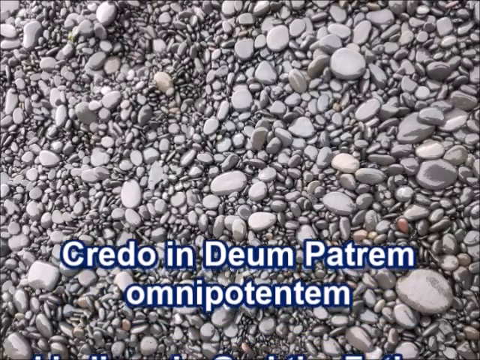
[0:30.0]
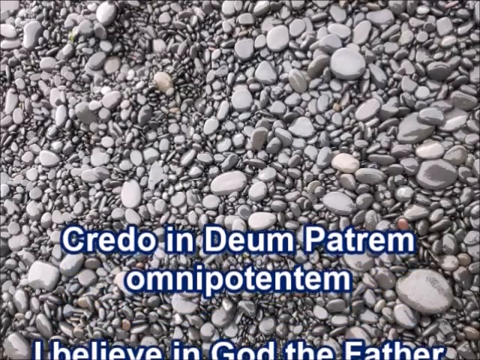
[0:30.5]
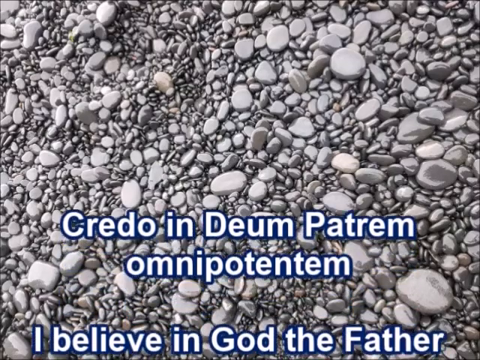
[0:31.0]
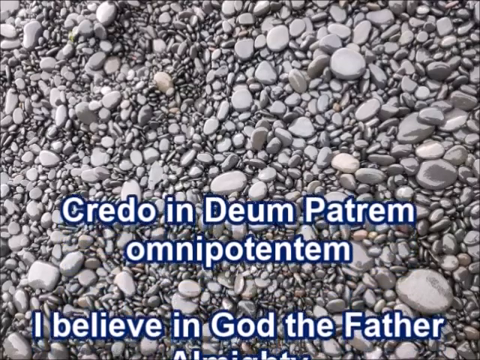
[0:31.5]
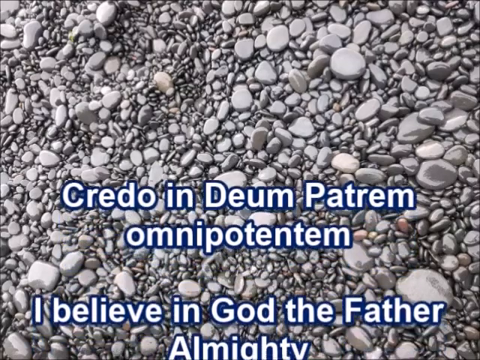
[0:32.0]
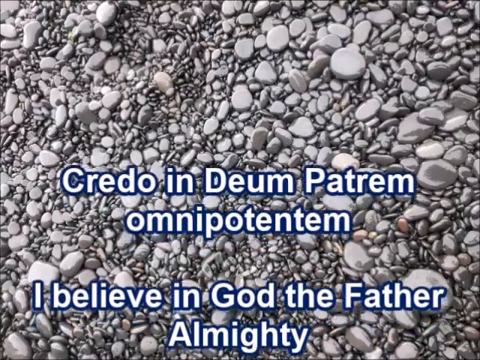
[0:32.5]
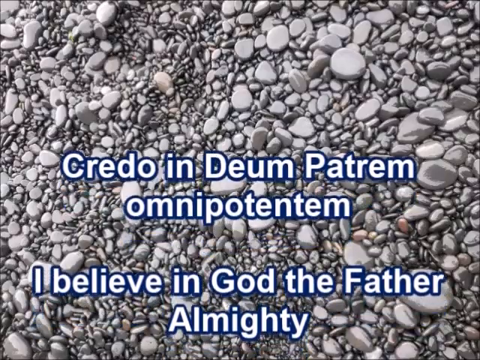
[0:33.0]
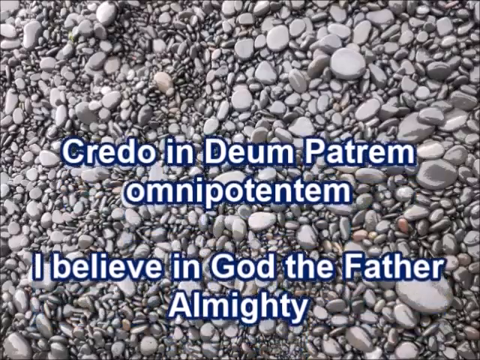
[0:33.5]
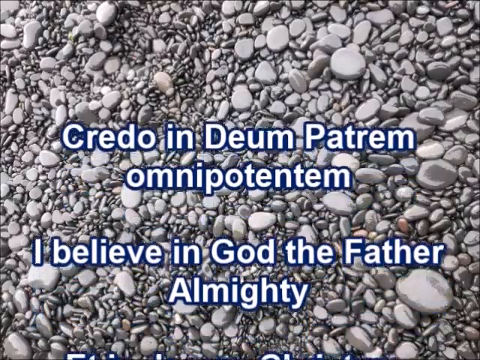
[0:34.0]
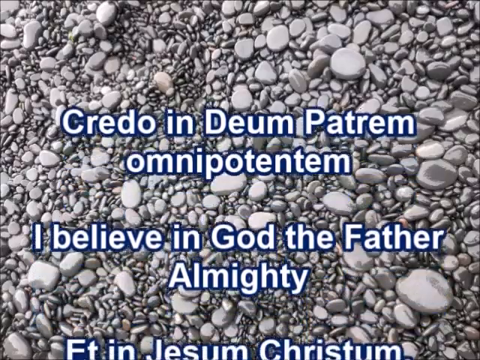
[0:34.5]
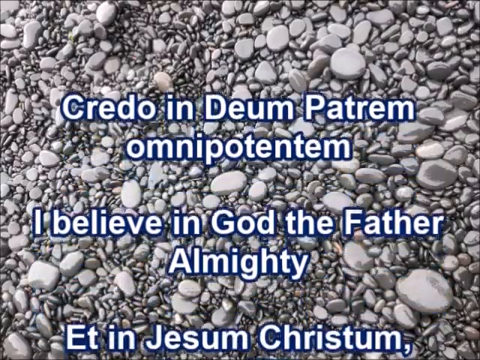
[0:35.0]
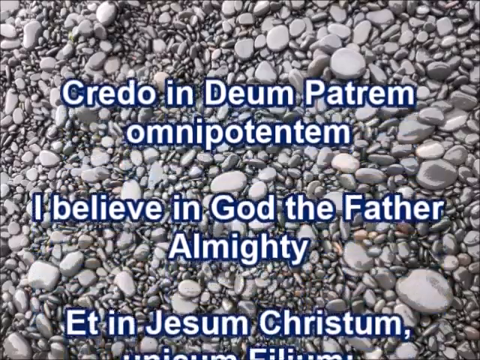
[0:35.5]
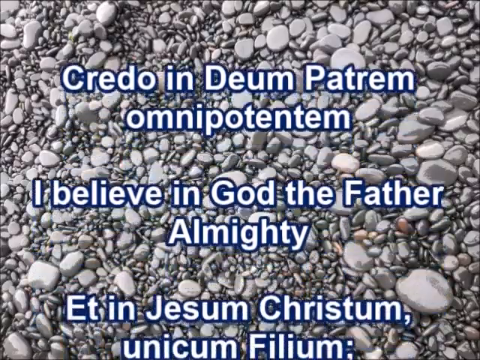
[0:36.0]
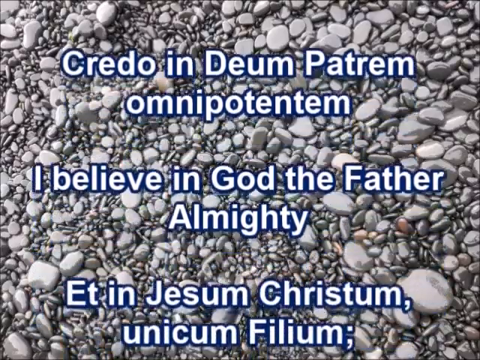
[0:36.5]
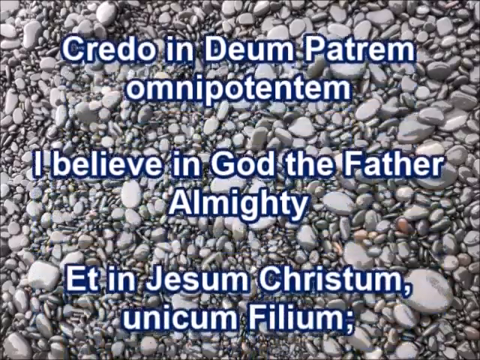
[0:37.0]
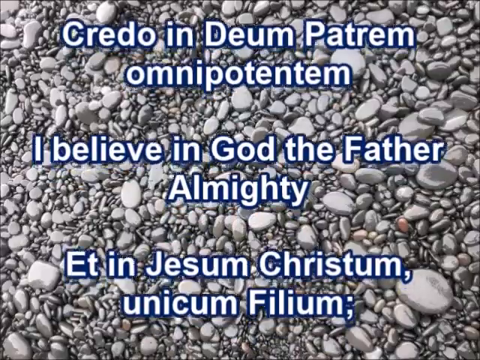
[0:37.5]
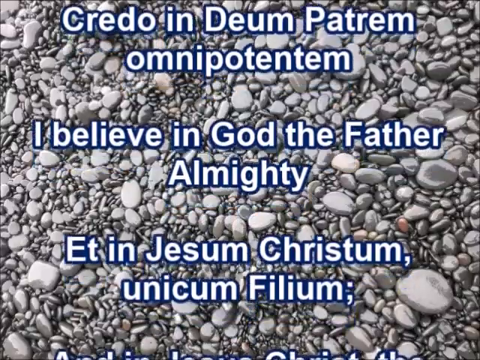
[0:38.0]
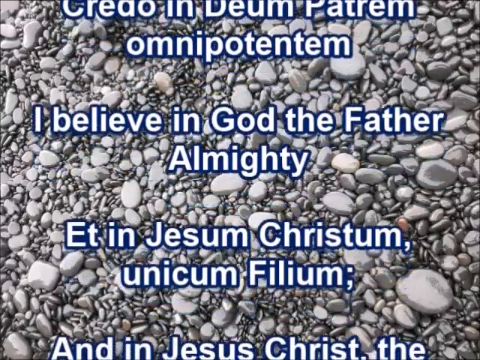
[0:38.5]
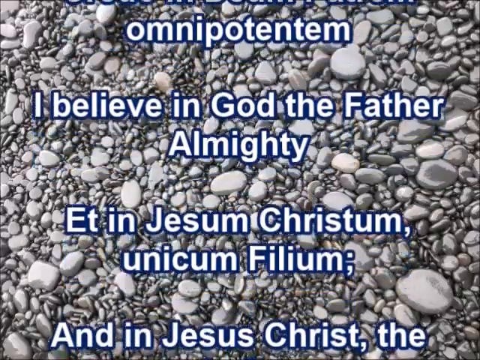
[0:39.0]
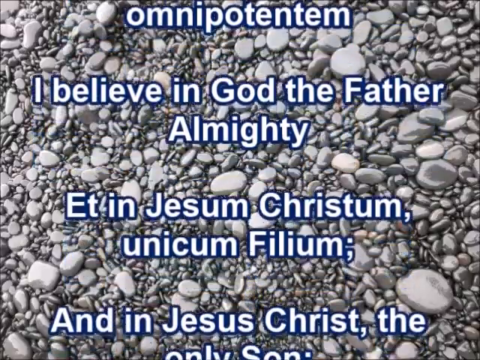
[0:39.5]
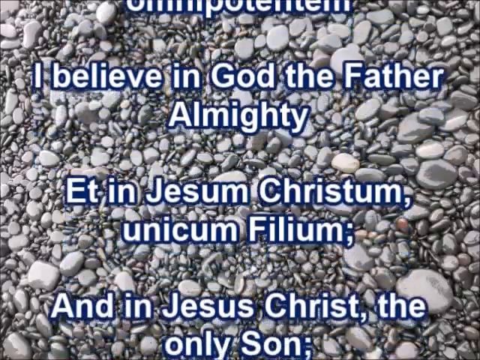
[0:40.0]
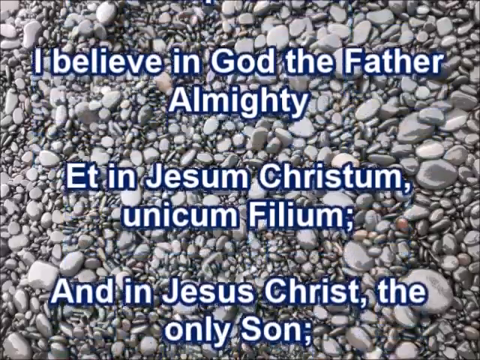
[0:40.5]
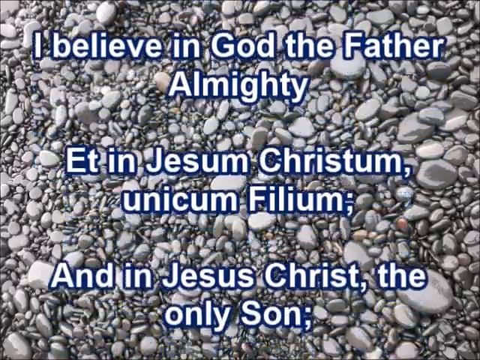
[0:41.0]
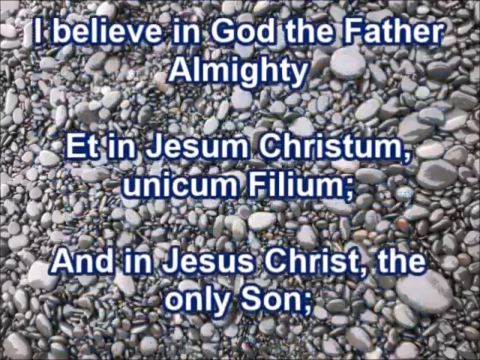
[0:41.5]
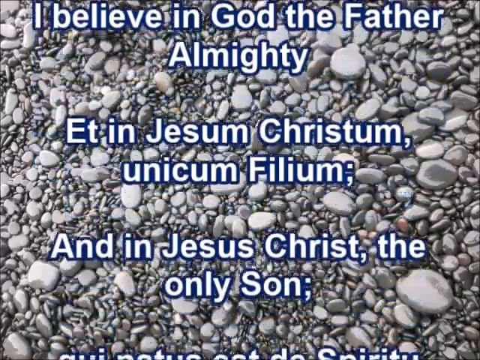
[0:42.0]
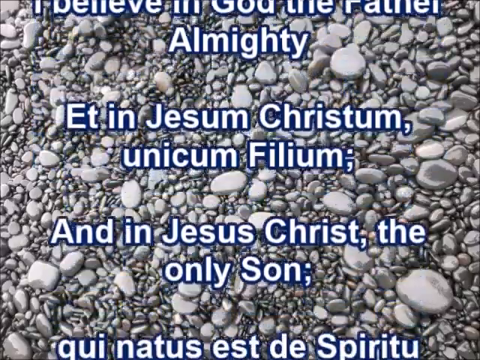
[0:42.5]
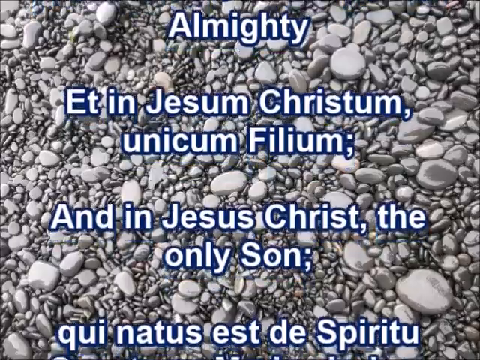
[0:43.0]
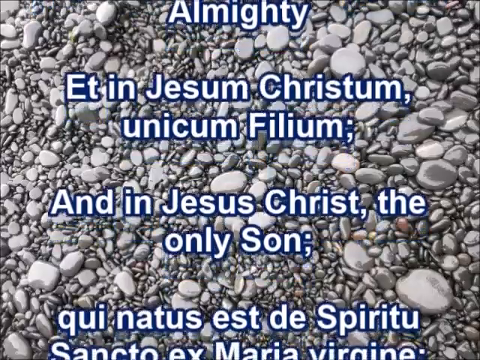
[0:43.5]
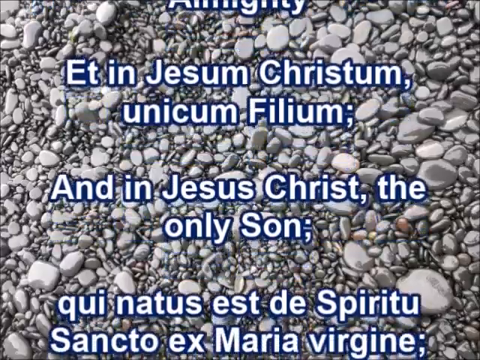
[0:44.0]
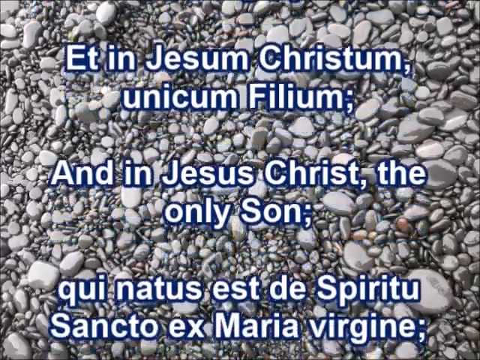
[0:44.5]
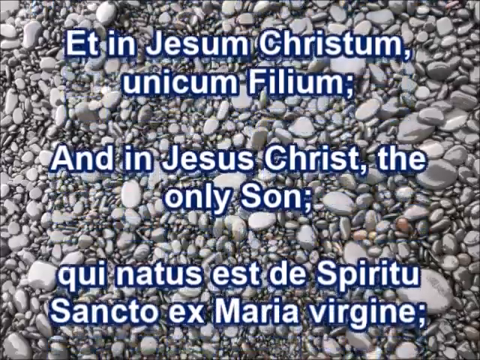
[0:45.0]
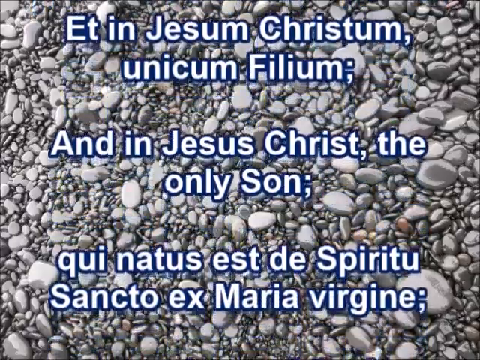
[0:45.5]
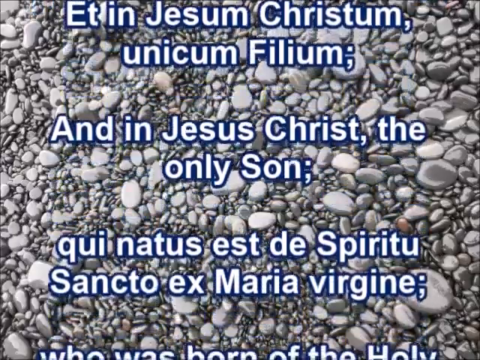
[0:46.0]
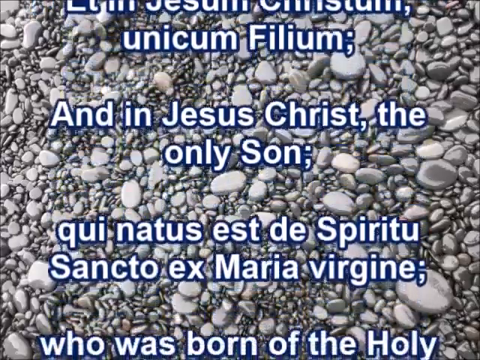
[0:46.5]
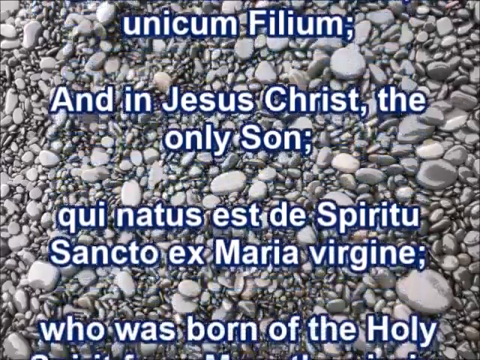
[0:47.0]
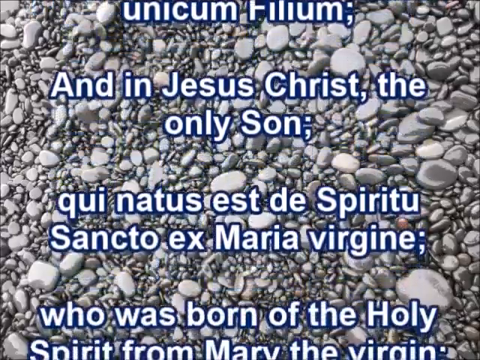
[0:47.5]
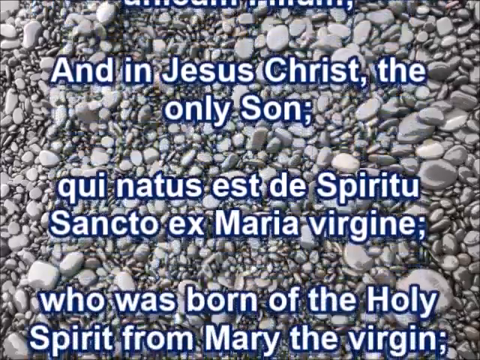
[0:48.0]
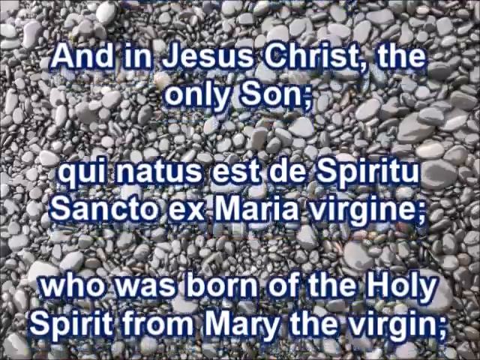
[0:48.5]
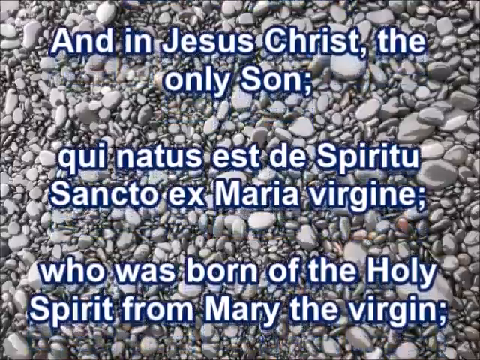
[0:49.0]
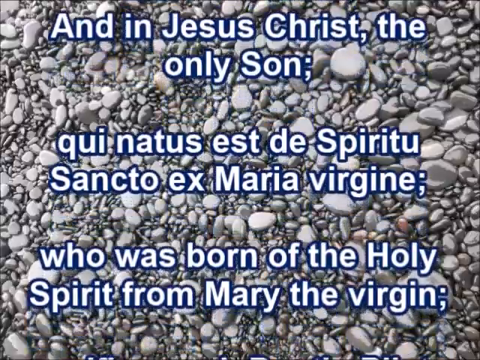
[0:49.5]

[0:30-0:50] Text moves upward across the screen, much like movie credits. It concerns God the Father and Jesus, stating that Jesus Christ is the only son. Each English line is followed by text in another language, apparently Italian. The background stays the same, still showing the pebbled rocks.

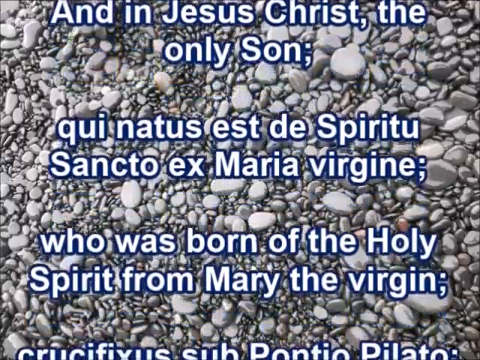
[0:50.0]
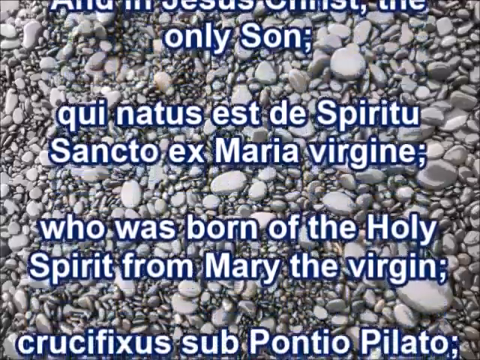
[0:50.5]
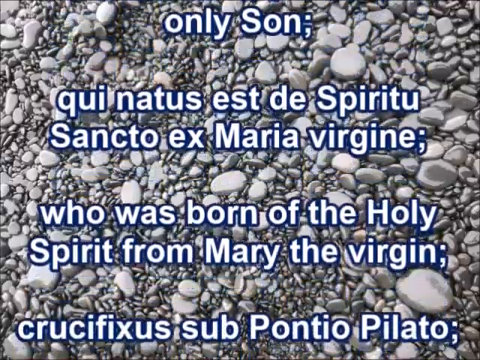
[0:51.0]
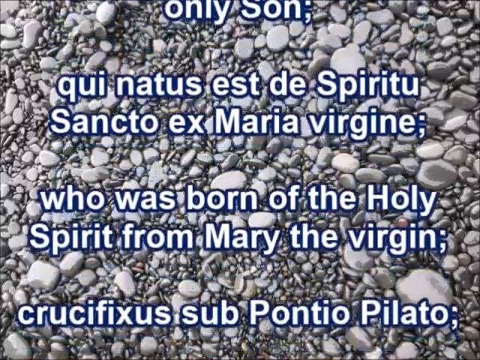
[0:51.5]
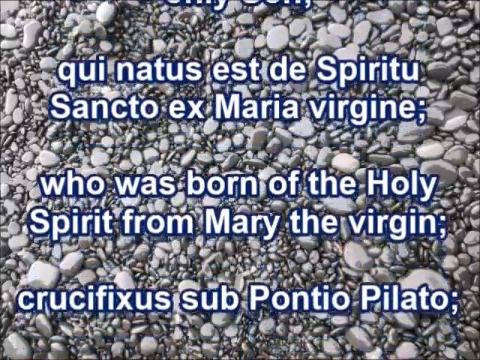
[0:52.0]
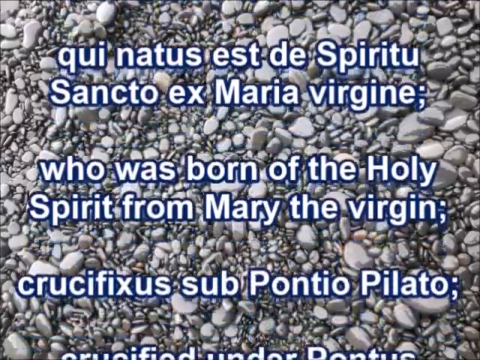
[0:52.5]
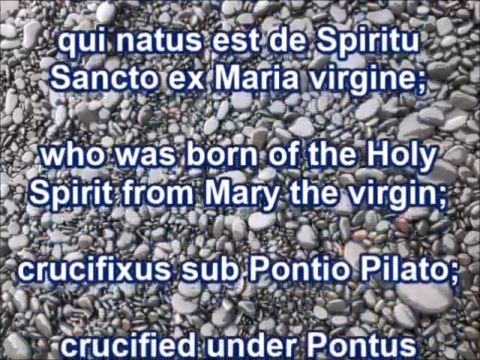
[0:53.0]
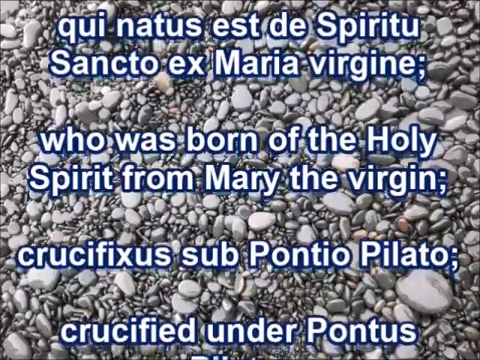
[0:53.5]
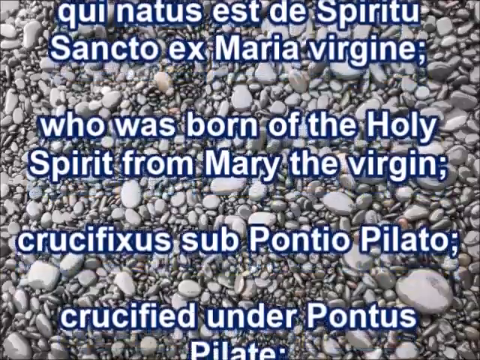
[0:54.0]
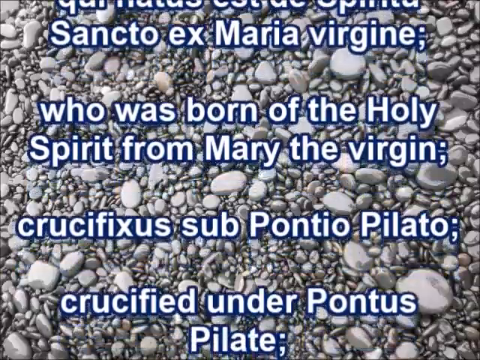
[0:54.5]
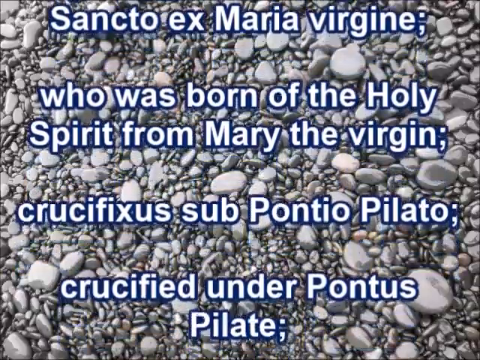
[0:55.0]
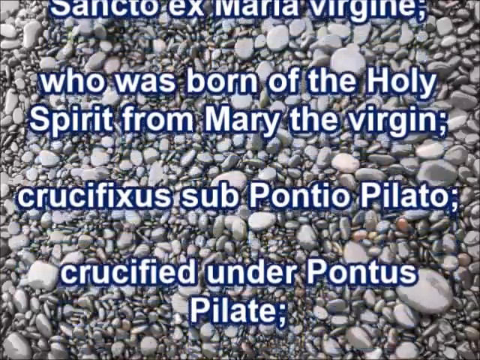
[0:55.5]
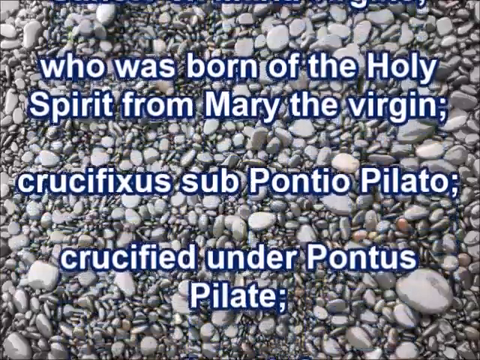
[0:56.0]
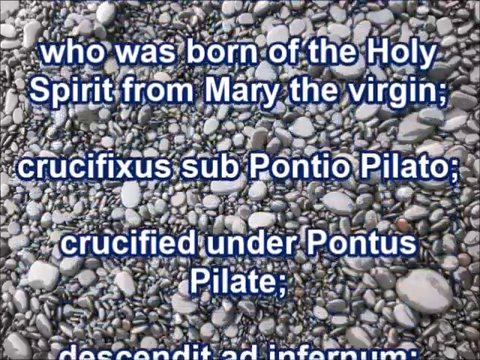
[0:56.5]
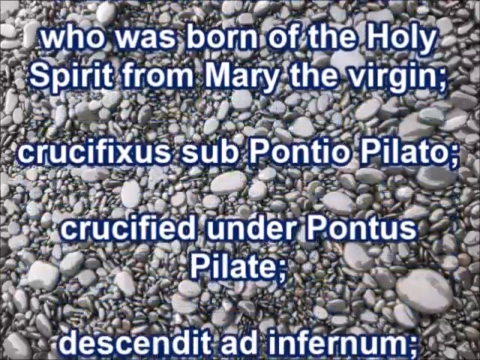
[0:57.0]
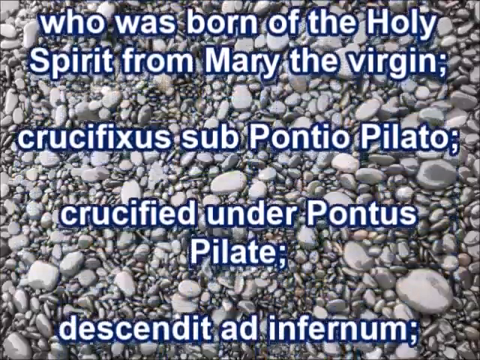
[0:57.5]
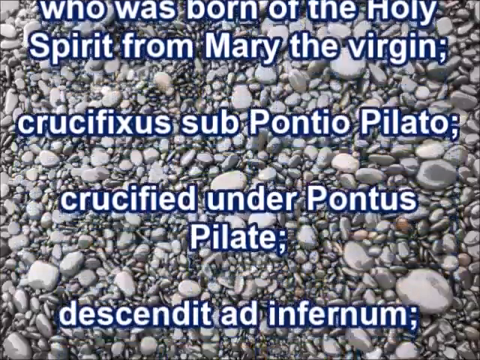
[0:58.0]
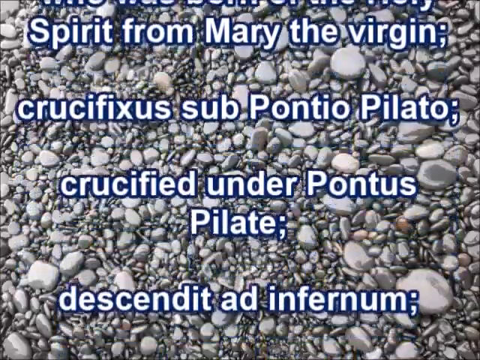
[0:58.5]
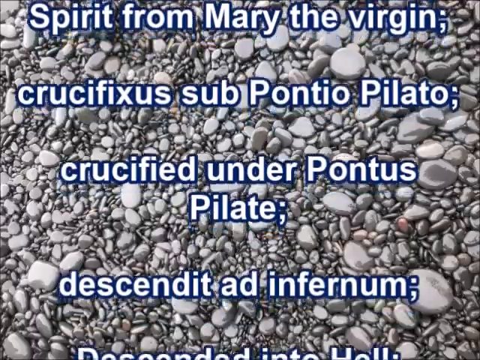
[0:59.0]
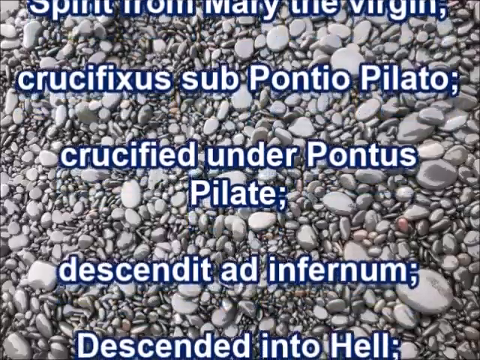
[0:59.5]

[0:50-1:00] The text continues: "who was born of the holy spirit from Mary the virgin," followed by the Italian version, then "crucified under Pontus Pilate." The lines keep moving upward like movie credits as more text comes in. The background and the font stay the same.